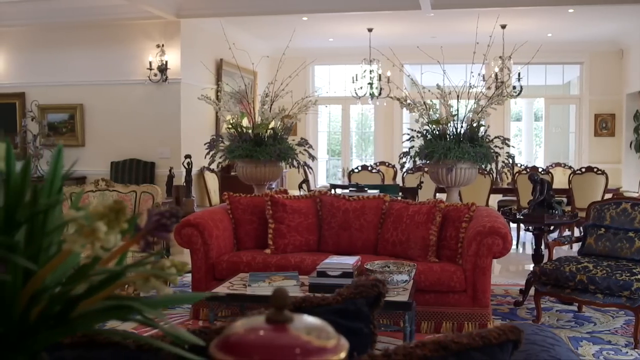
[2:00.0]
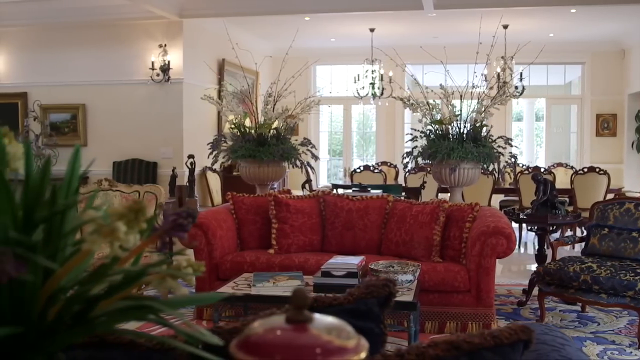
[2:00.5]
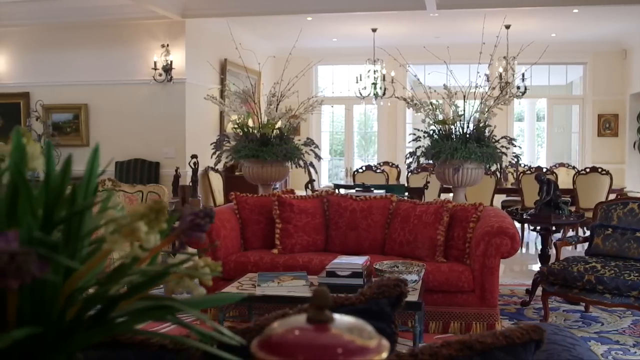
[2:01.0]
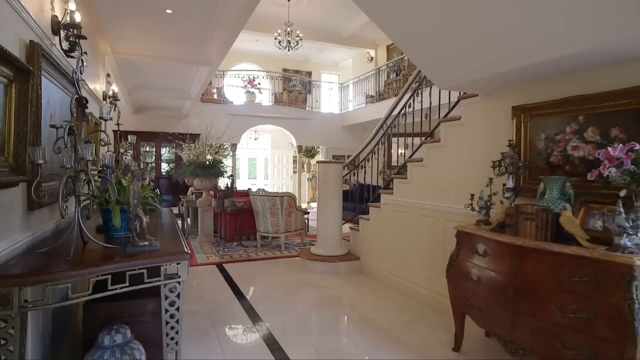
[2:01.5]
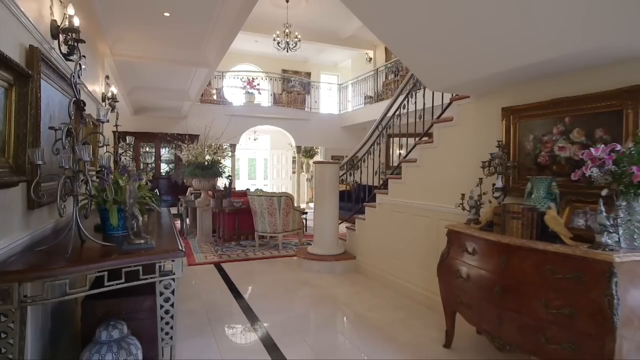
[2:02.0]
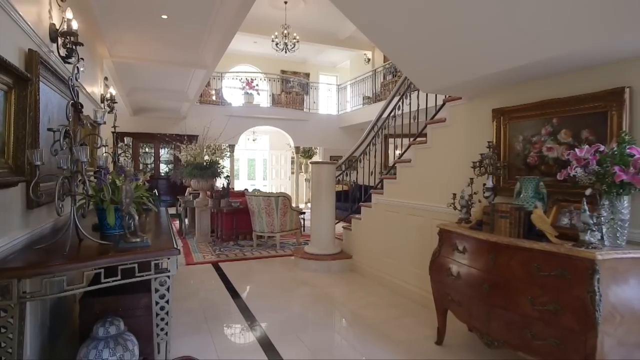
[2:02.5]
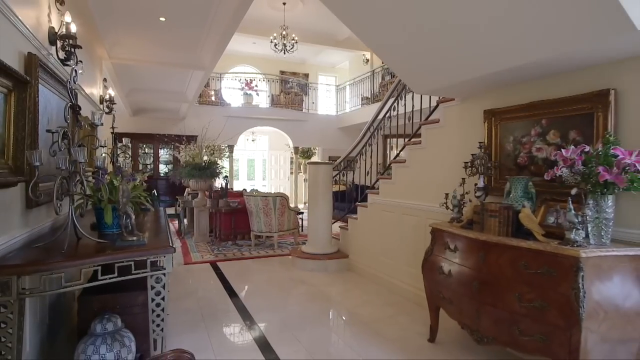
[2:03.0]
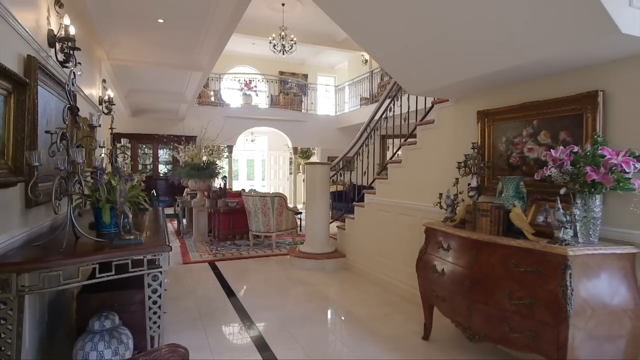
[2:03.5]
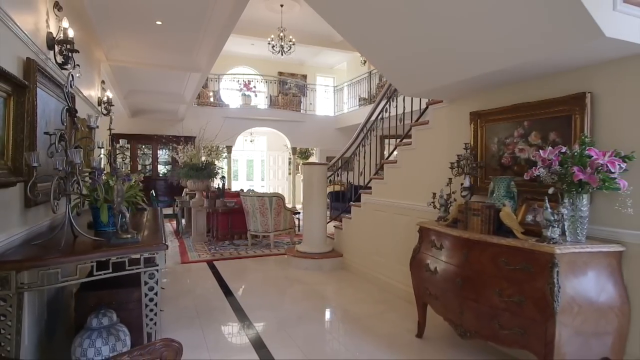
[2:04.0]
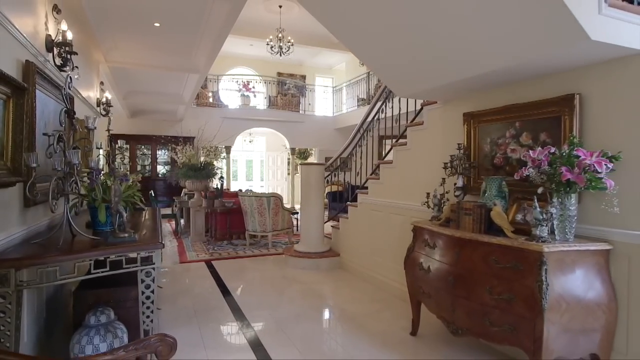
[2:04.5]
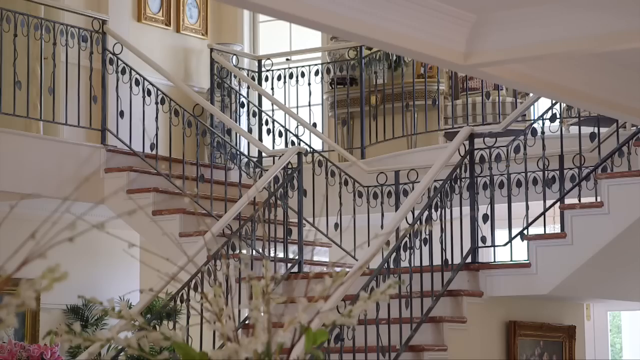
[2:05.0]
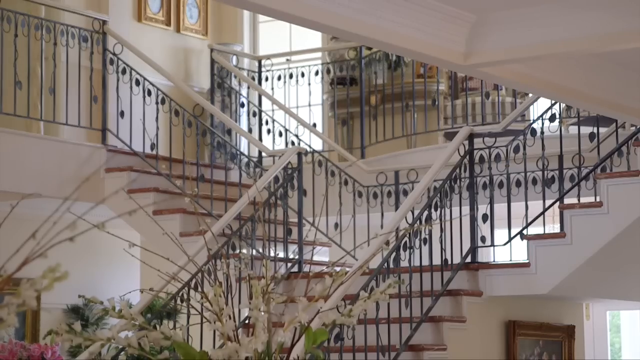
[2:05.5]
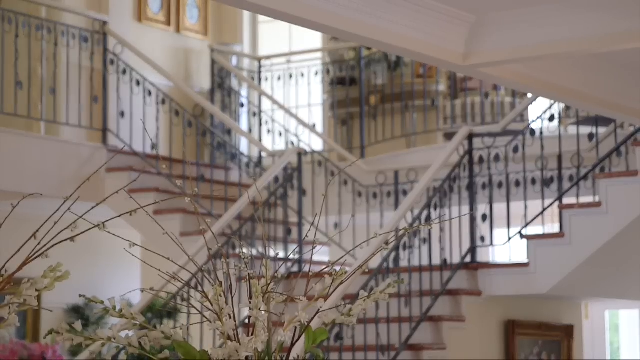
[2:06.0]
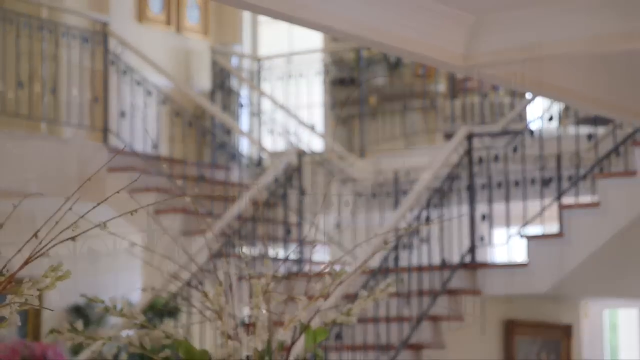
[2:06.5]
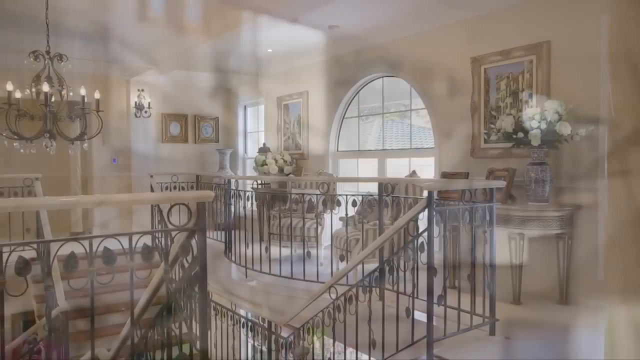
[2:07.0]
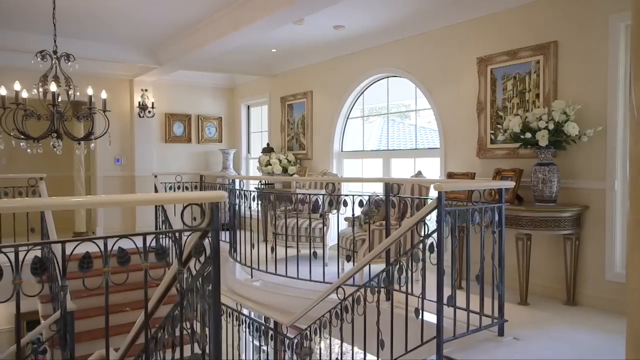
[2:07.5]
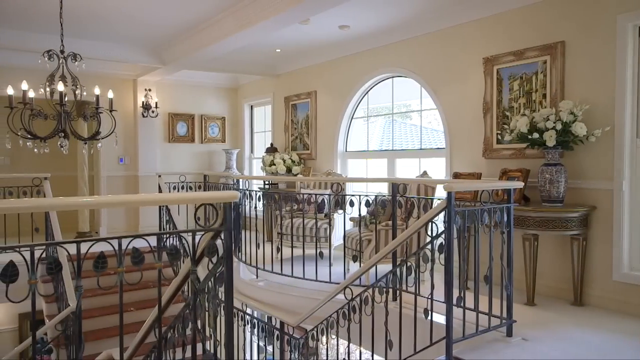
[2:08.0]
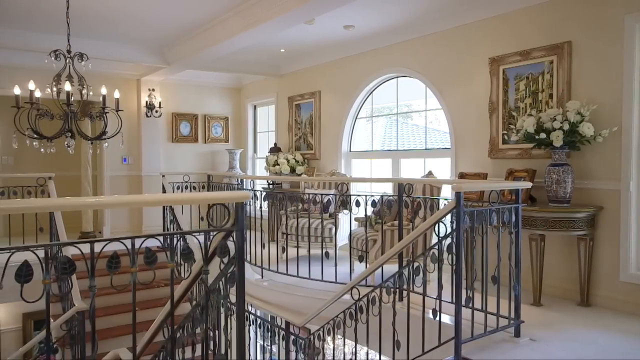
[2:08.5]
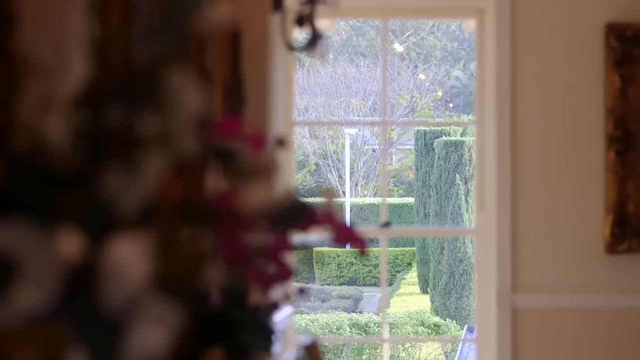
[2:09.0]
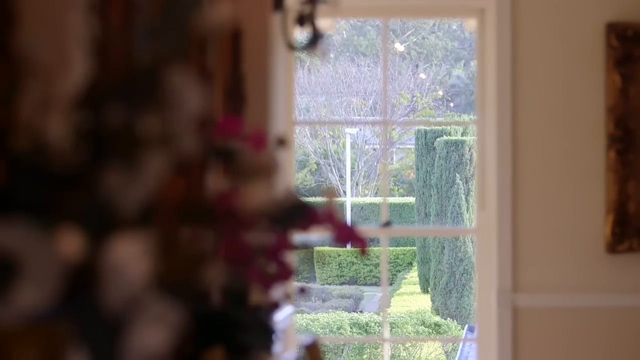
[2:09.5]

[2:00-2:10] The staircase is shown again, with black bars and a white crossbar, leading up to the second floor. A view of the outside, kind of bright, shows a green garden. A big wooden cupboard has a vase with green and pink flowers on top, and a framed image hangs on the wall above the cupboard. A view from the top or middle floor shows the top level of the staircase, along with frames, the walls and a window.